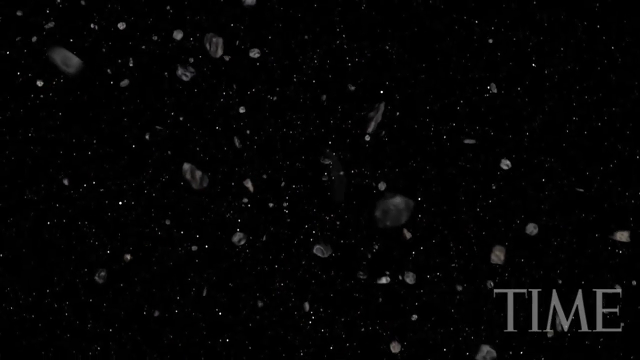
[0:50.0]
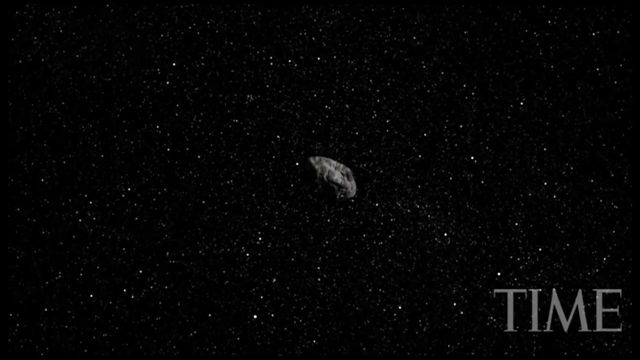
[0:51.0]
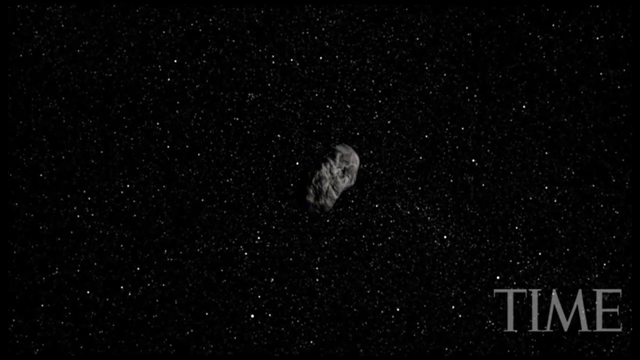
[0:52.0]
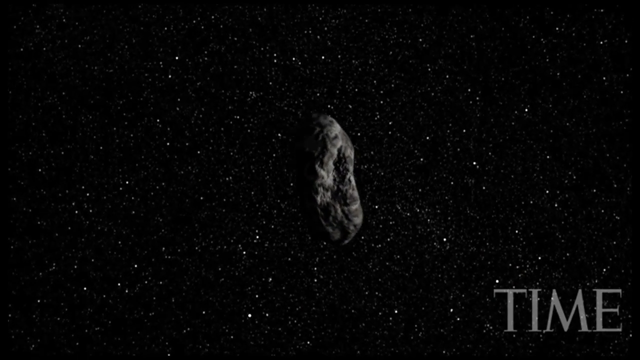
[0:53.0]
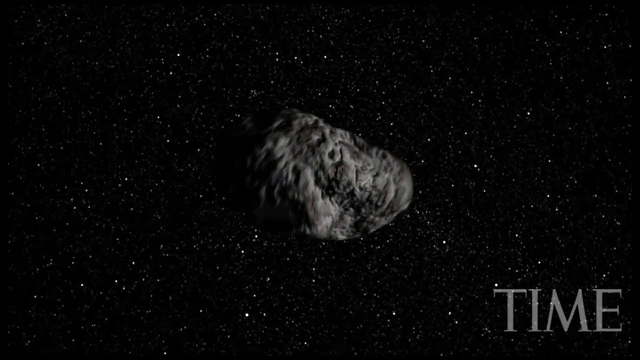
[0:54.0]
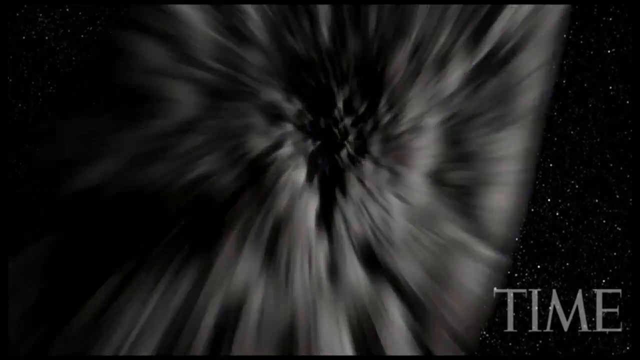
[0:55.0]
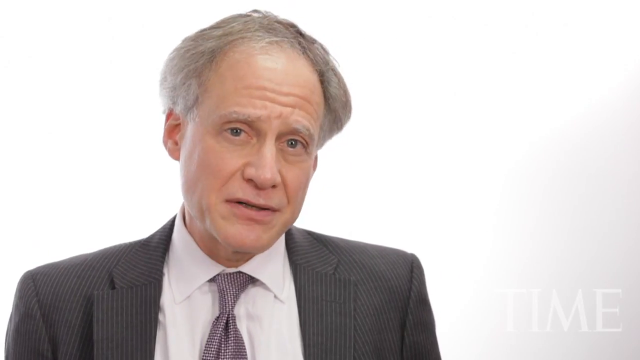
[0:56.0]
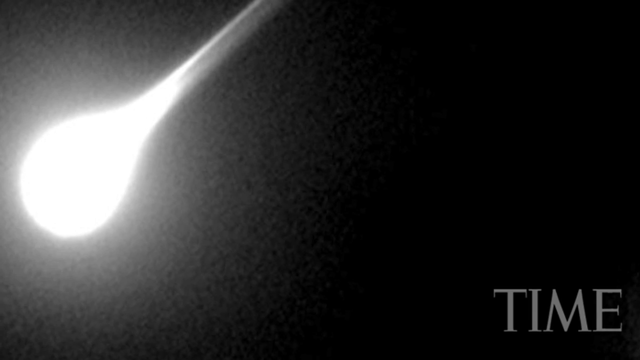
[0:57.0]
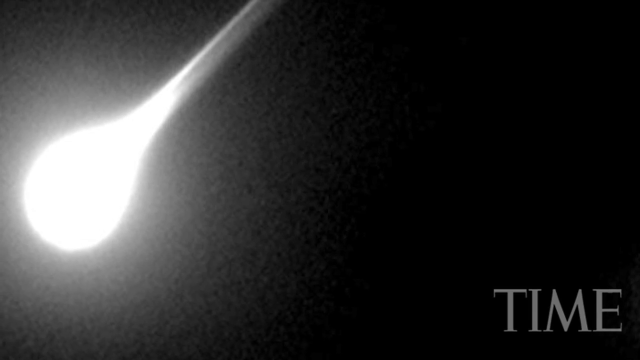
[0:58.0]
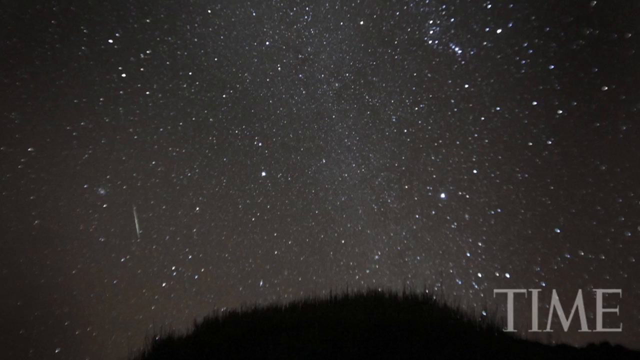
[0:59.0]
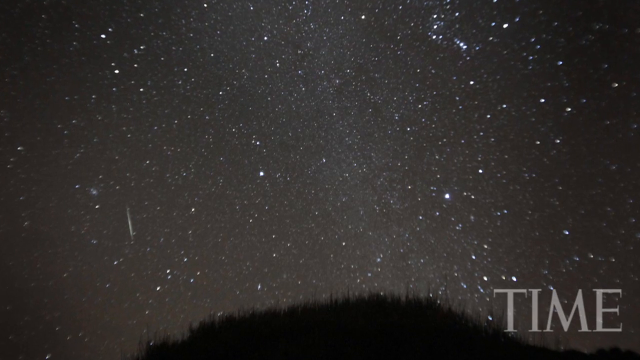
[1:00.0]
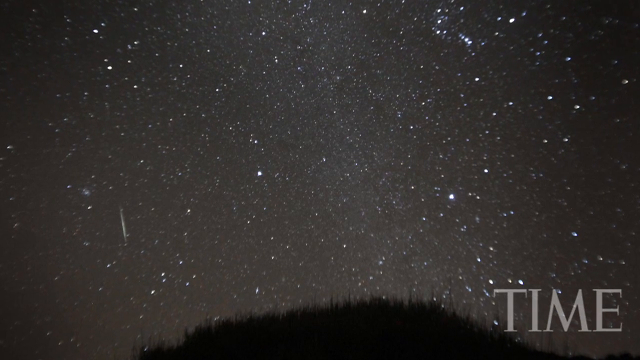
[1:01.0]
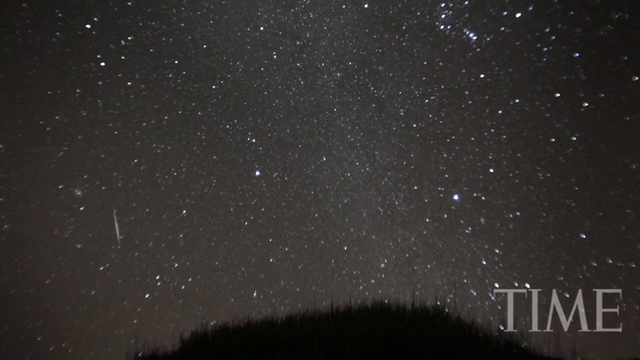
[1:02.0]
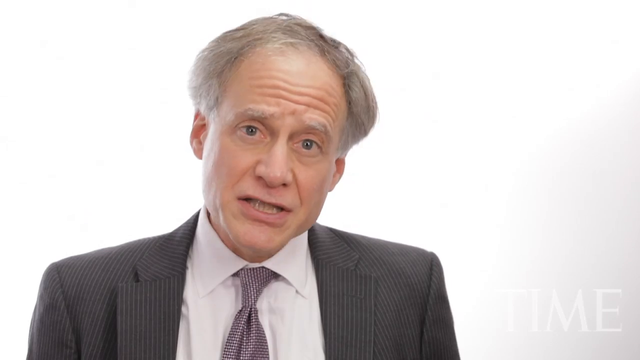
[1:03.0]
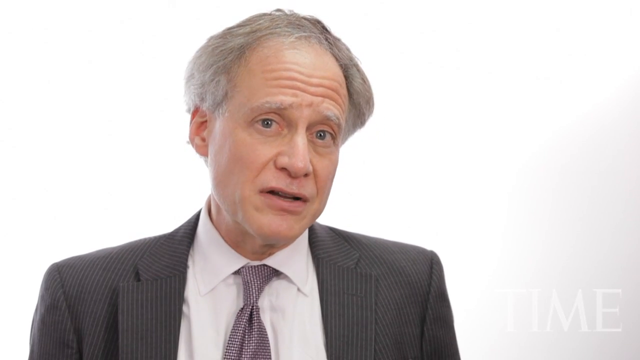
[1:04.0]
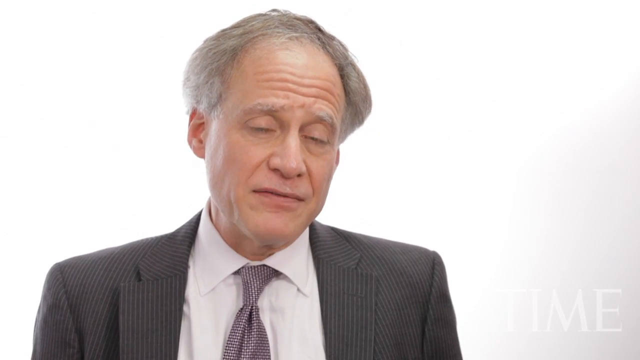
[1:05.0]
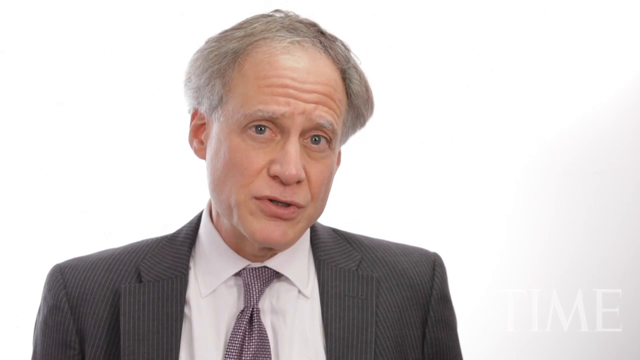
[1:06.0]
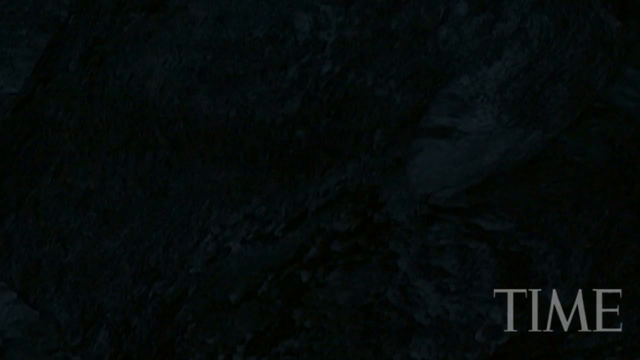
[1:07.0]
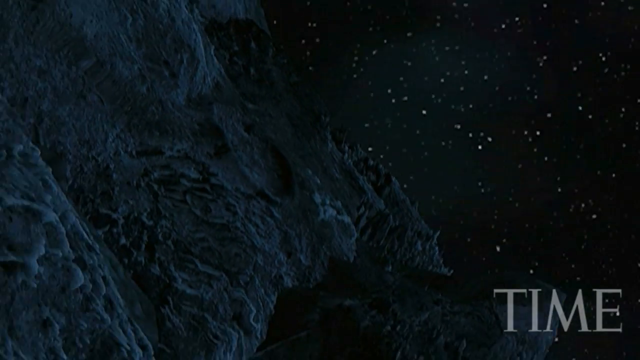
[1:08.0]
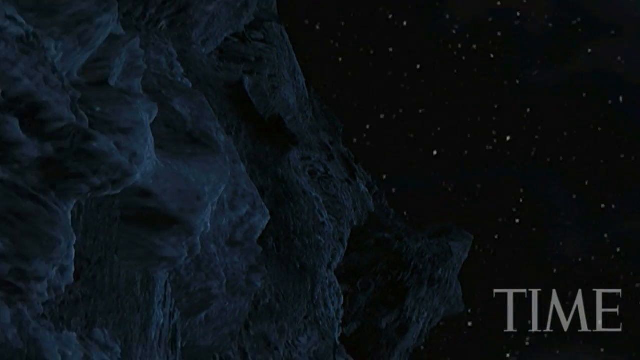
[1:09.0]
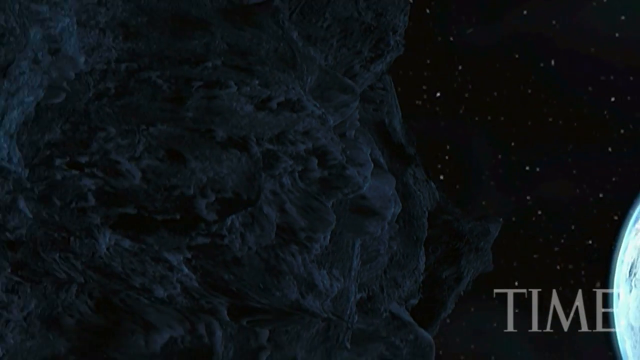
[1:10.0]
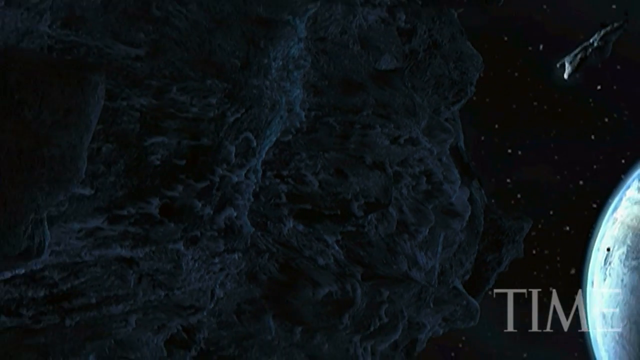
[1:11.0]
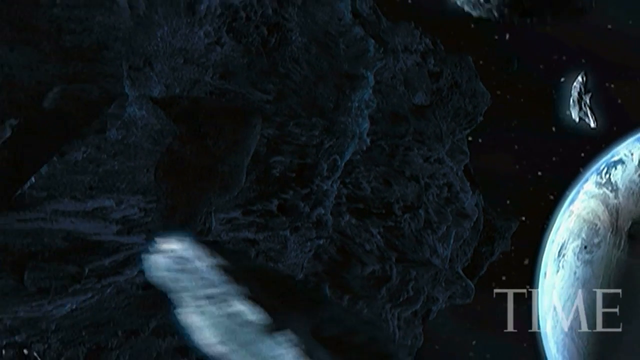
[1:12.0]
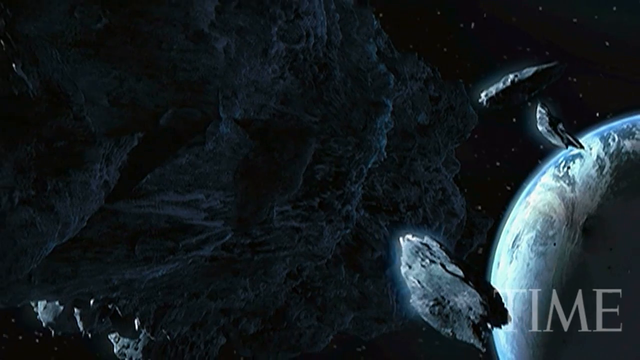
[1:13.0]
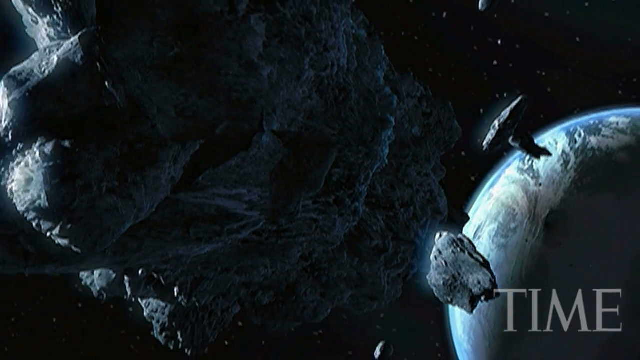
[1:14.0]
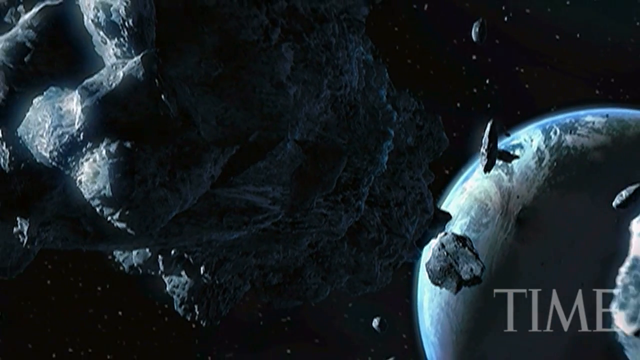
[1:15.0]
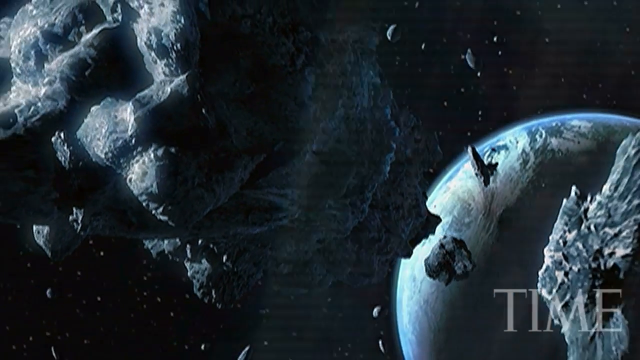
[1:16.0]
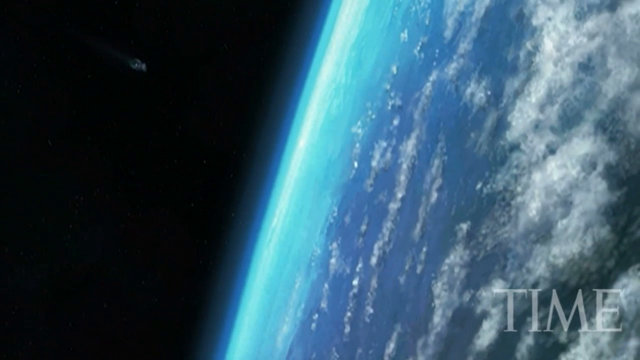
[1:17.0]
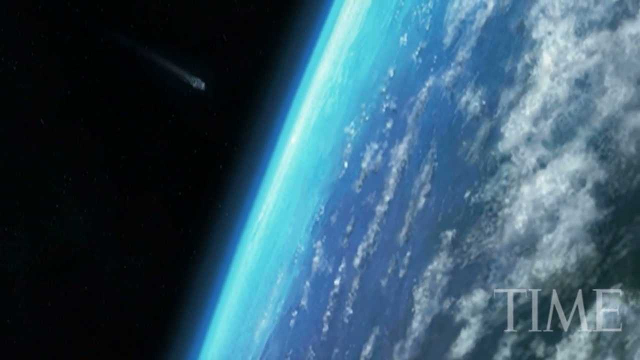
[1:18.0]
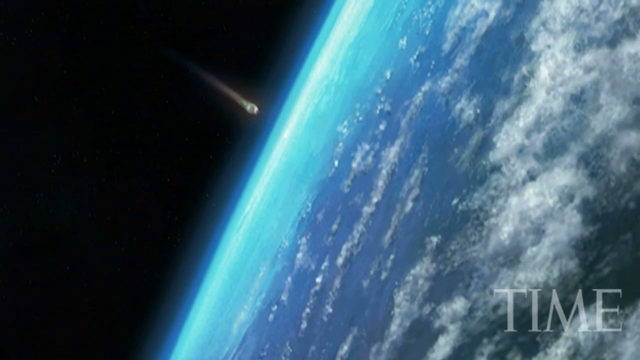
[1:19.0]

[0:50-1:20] A large asteroid in the middle of the screen approaches the front of the frame, slowly spinning in a counterclockwise circle, kind of spinning forward. The video then transitions to a man talking, followed by different scenes of telescopes pointed up into space at the stars. Next it shows large asteroids orbiting Earth and several asteroids falling into Earth's atmosphere, heading down to impact Earth.